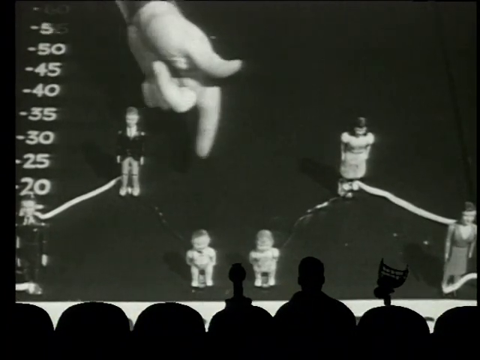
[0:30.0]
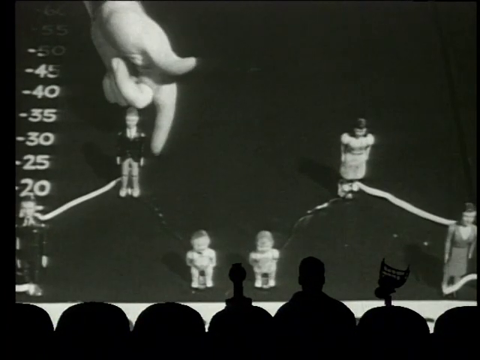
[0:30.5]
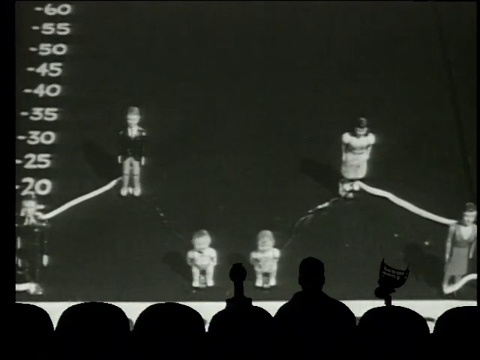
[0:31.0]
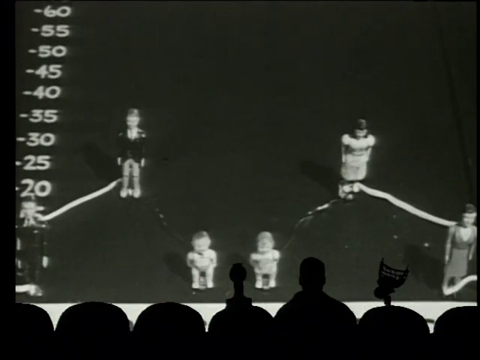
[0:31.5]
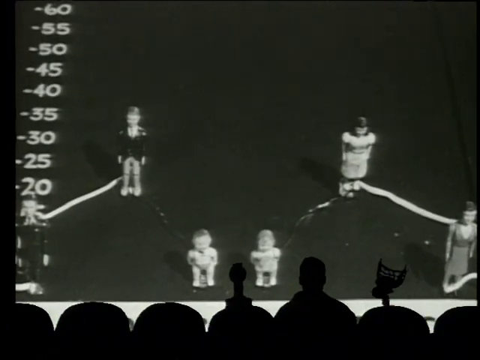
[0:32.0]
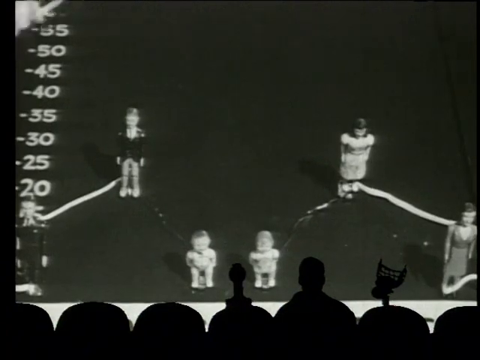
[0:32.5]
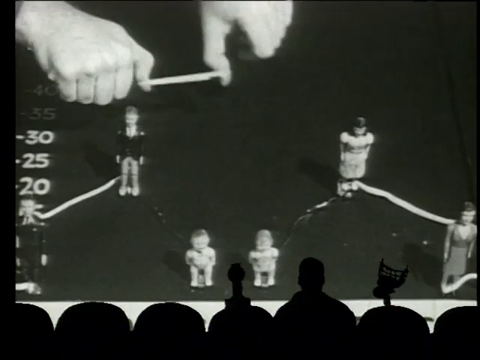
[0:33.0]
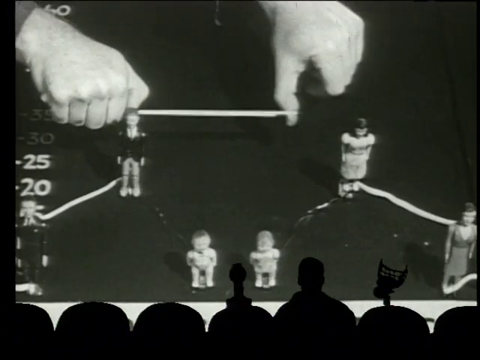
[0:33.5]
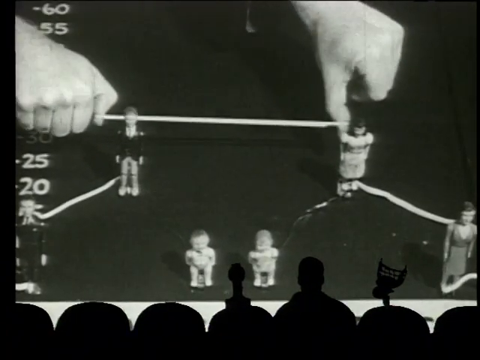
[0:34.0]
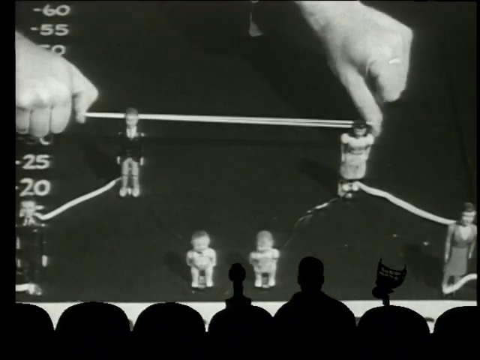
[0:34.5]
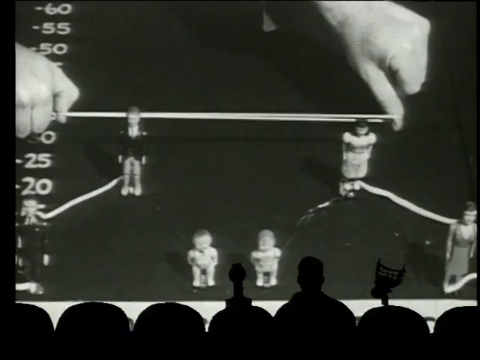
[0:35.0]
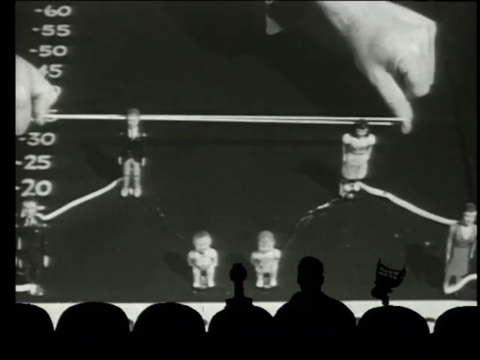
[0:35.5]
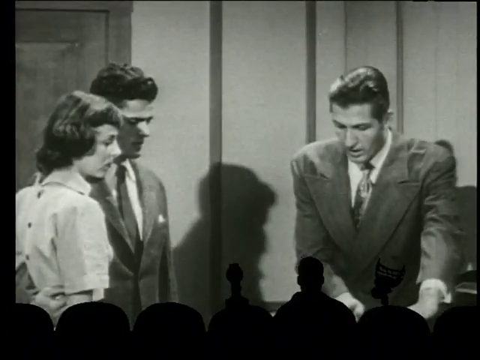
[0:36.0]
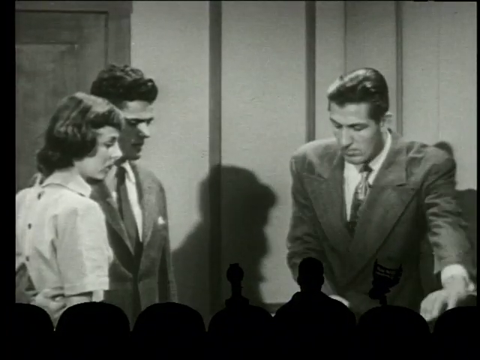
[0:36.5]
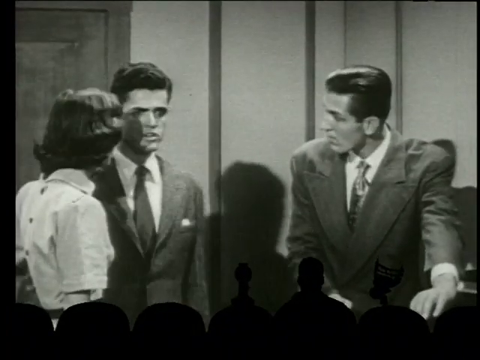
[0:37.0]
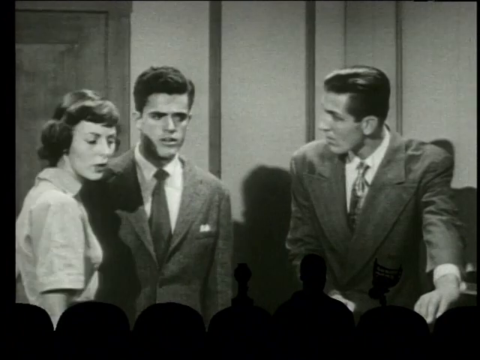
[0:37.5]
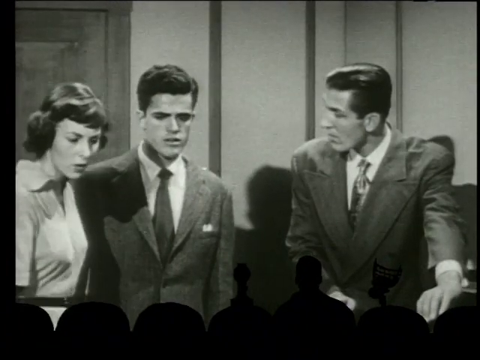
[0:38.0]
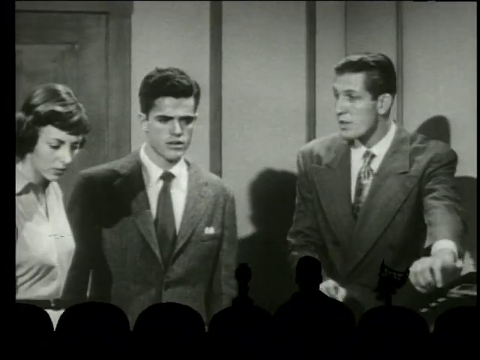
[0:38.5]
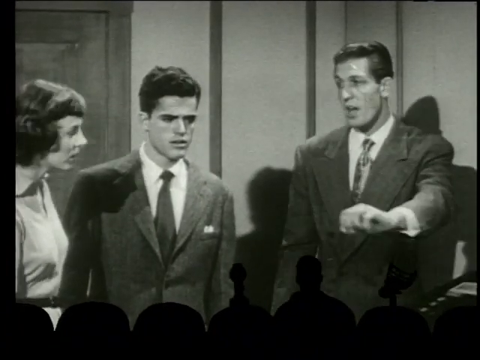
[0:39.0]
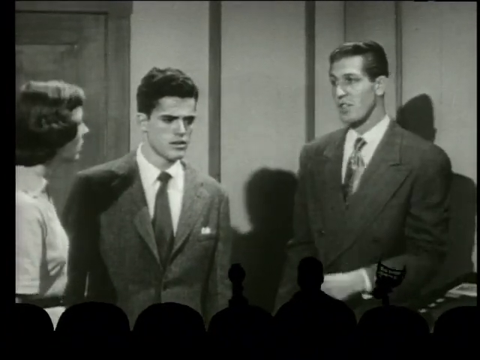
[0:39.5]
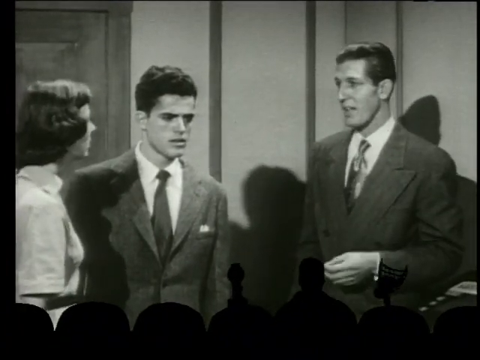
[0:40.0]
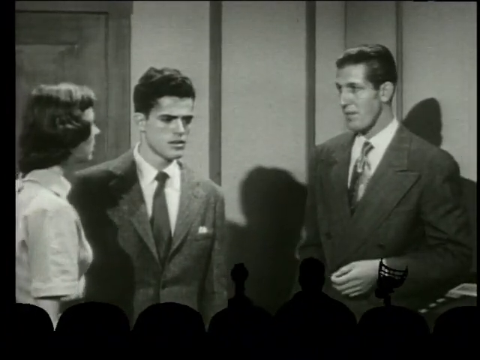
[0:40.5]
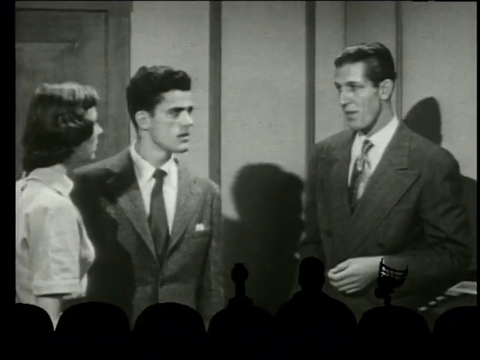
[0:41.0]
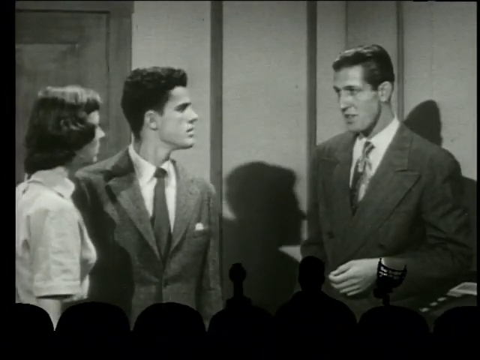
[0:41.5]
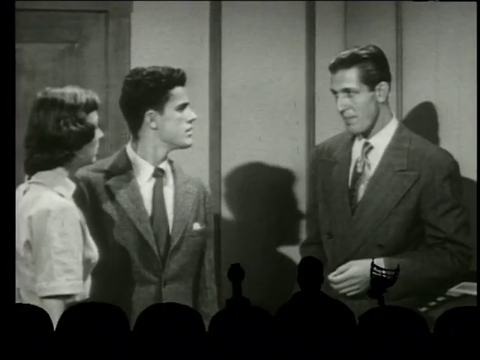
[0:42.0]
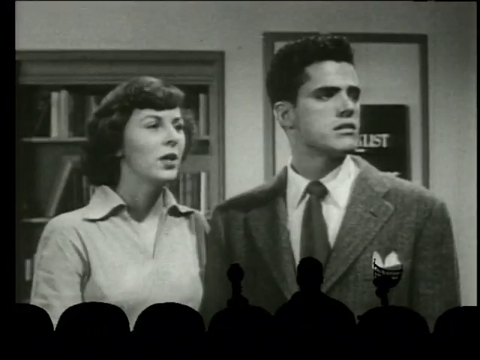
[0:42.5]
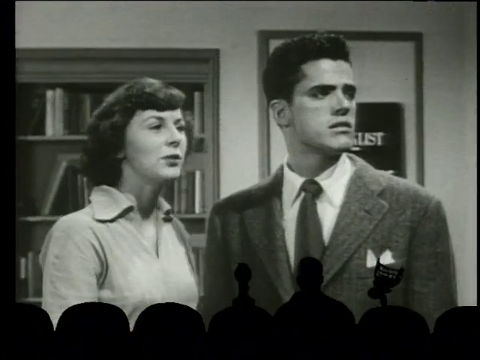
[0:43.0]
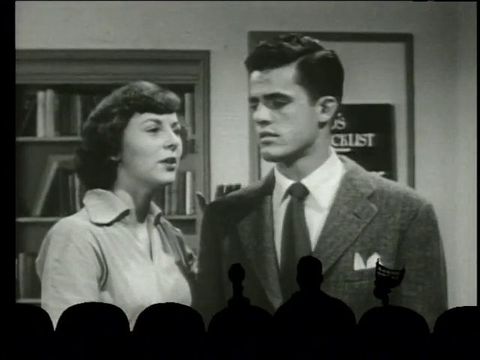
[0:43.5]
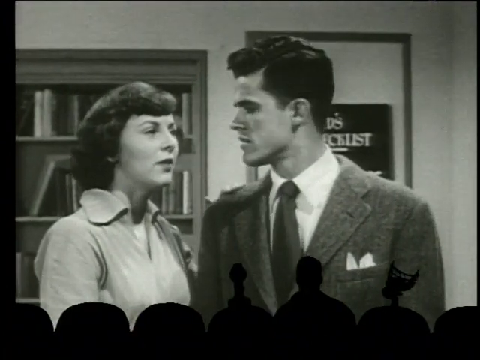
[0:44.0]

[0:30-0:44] Inside the theater, the film is still being projected and remains the main subject. The audience is still visible from behind, some seated and others standing. In the film, a gentleman points at the table, which holds six figures: two babies, two young adults and two adults, along with numbers from 20 to 60. The characters converse and point to the table. The elastic bladder is visible, then it snaps and disappears. The three of them keep talking. At the back, behind the woman, there are bookshelves with books neatly arranged on the shelves.